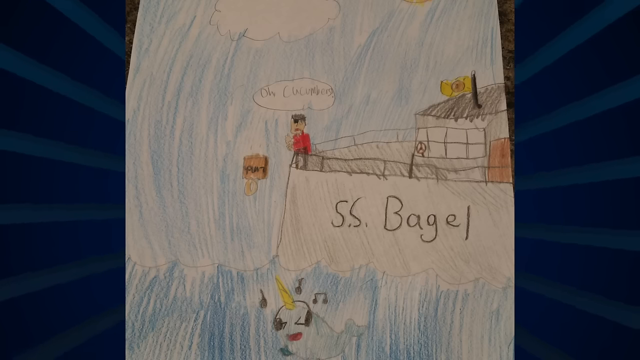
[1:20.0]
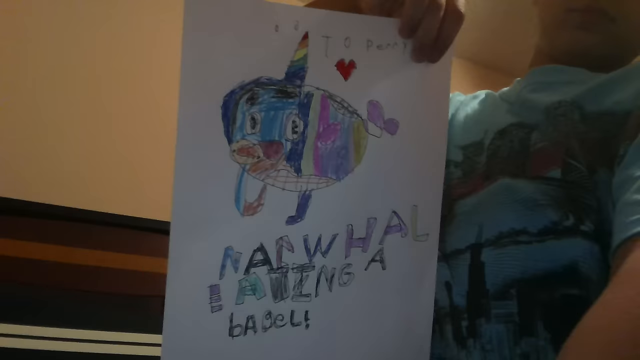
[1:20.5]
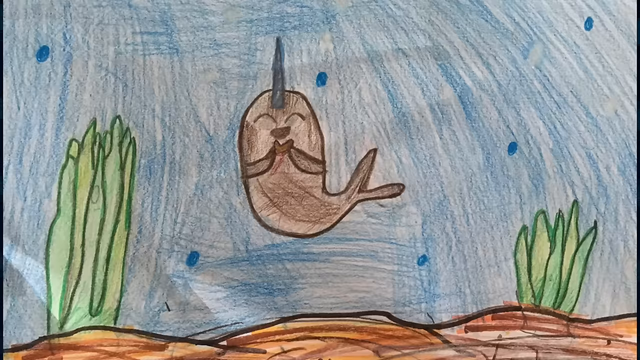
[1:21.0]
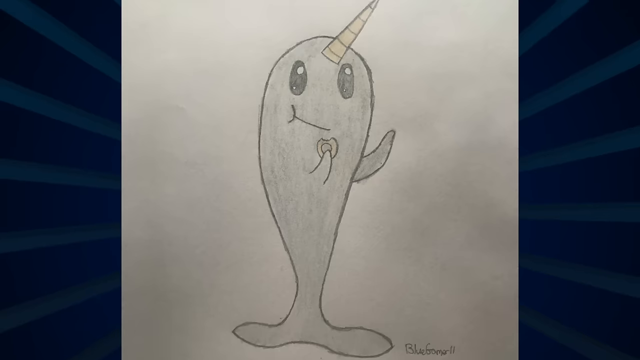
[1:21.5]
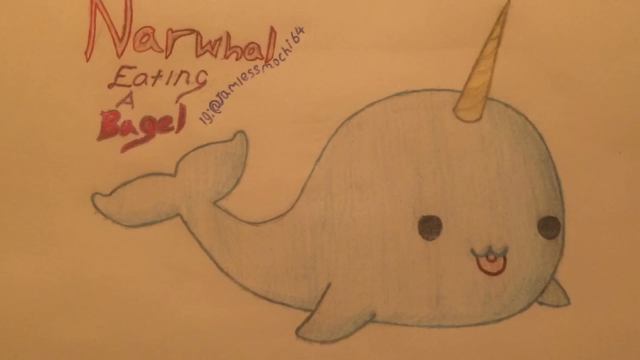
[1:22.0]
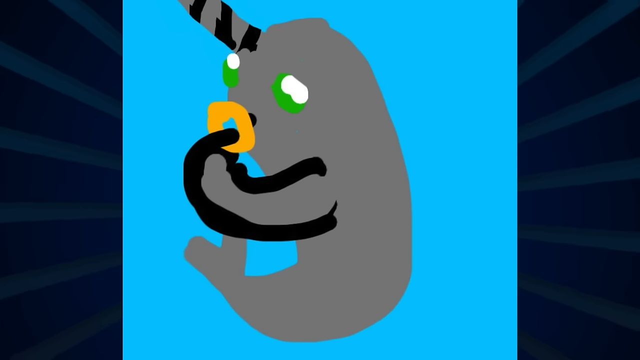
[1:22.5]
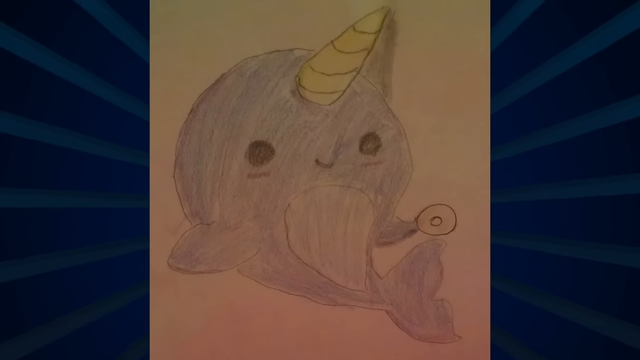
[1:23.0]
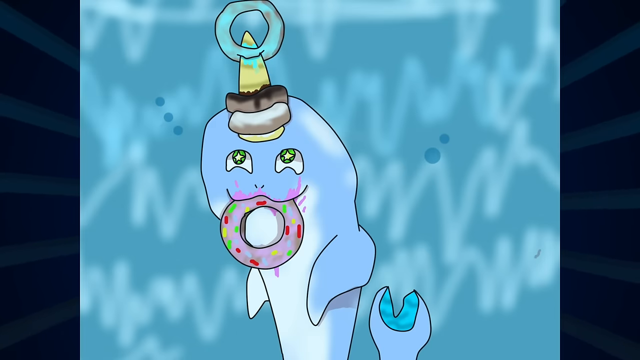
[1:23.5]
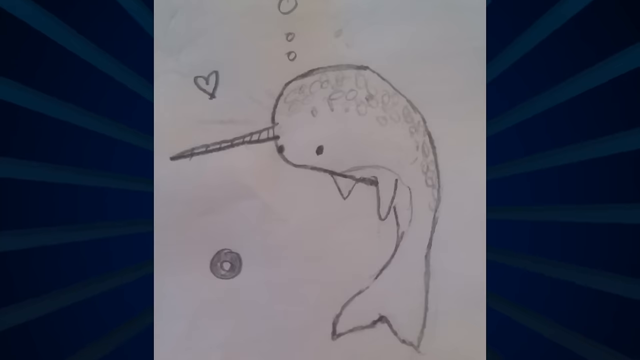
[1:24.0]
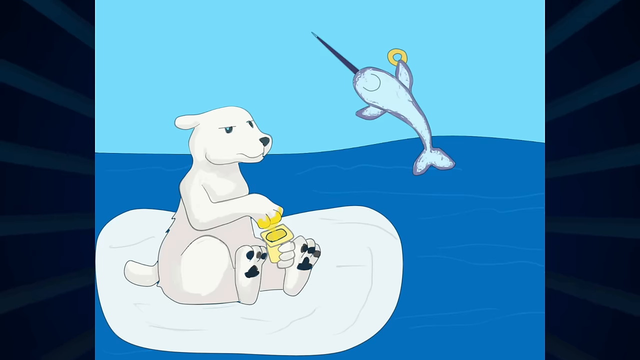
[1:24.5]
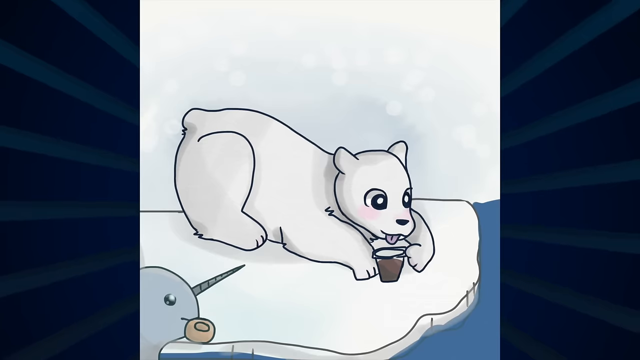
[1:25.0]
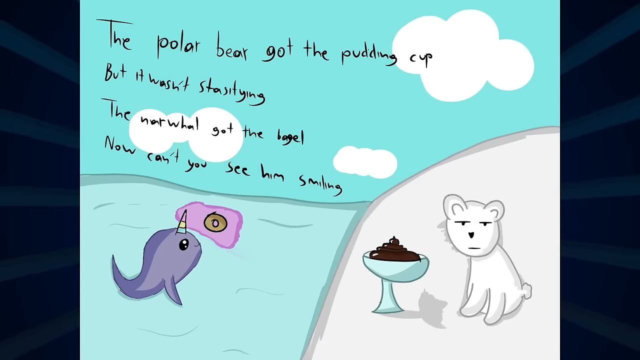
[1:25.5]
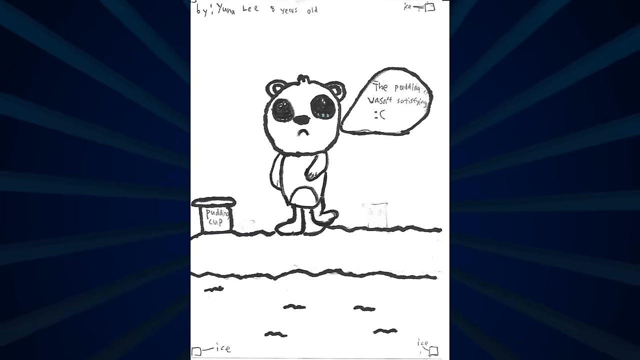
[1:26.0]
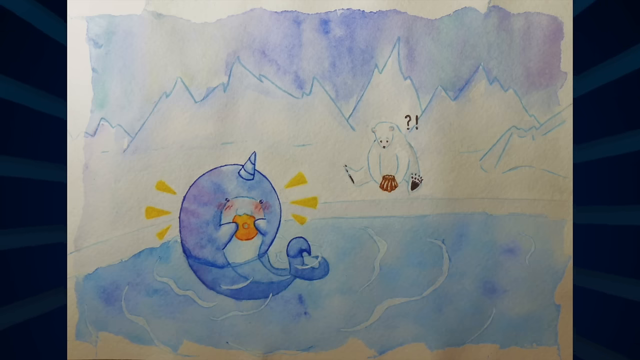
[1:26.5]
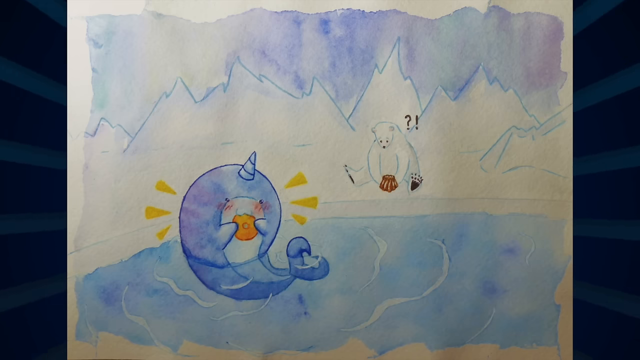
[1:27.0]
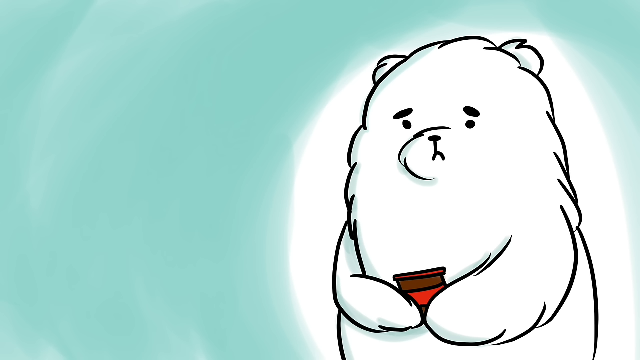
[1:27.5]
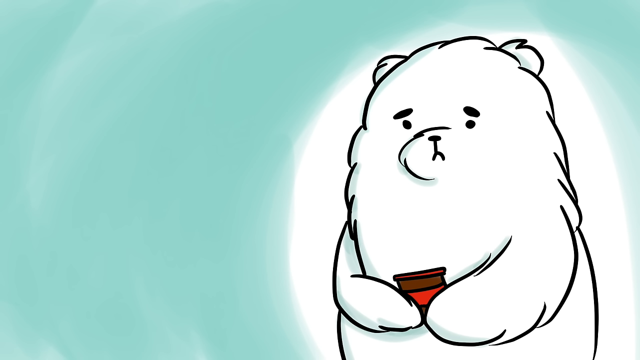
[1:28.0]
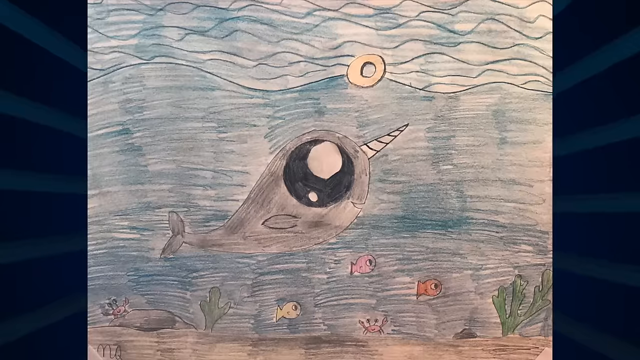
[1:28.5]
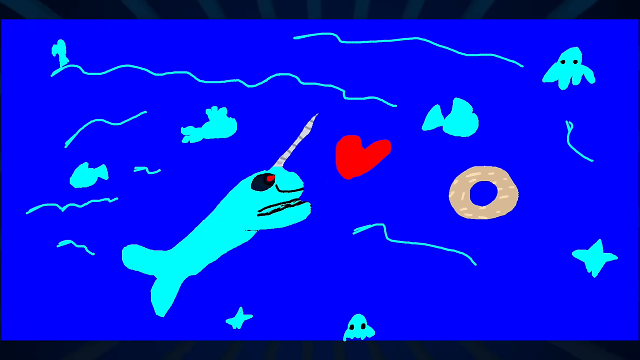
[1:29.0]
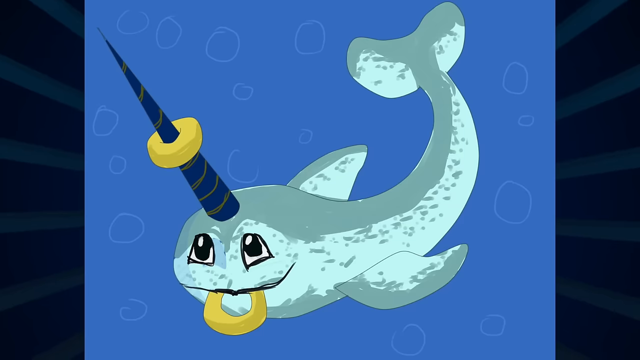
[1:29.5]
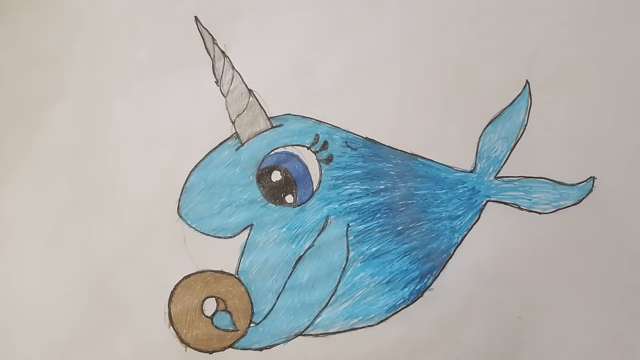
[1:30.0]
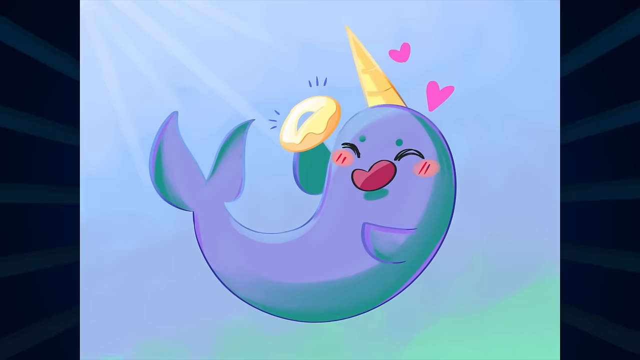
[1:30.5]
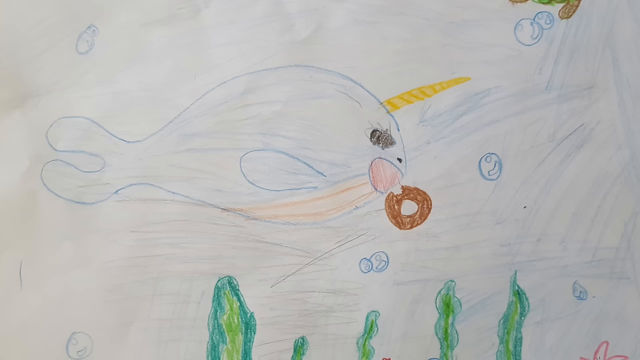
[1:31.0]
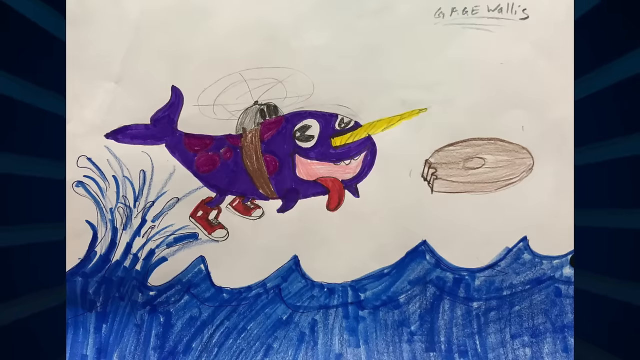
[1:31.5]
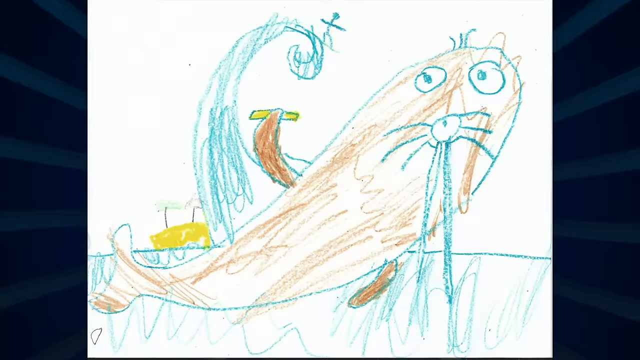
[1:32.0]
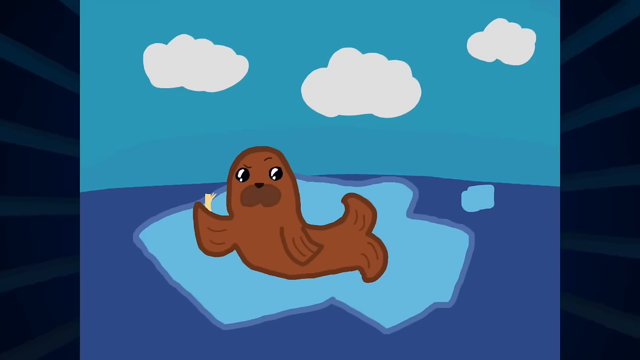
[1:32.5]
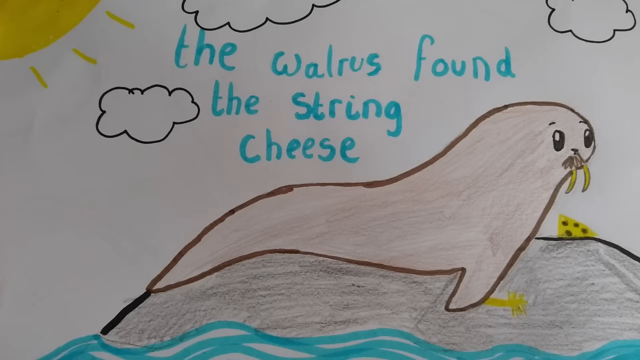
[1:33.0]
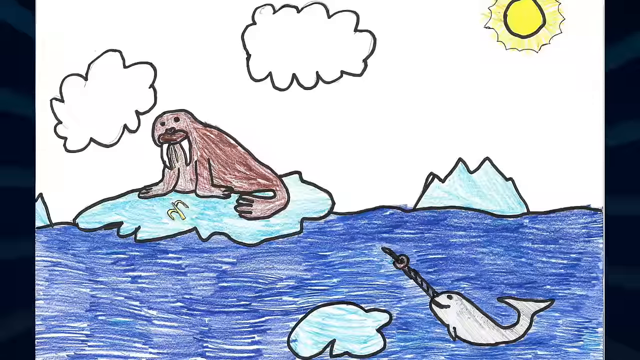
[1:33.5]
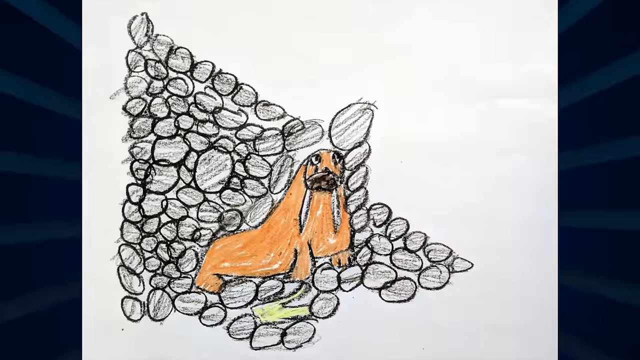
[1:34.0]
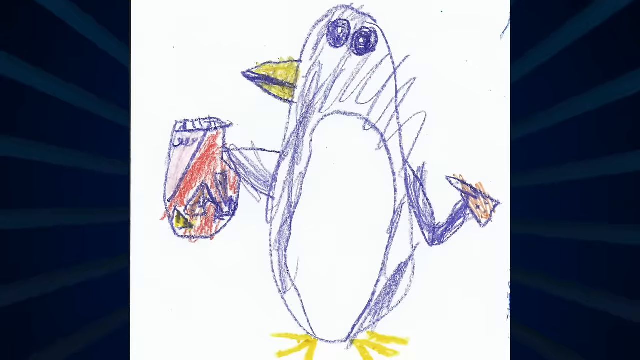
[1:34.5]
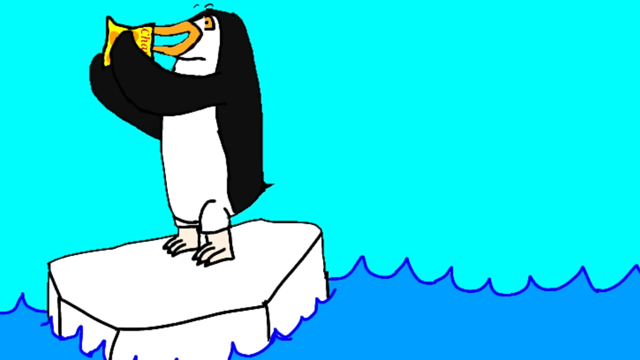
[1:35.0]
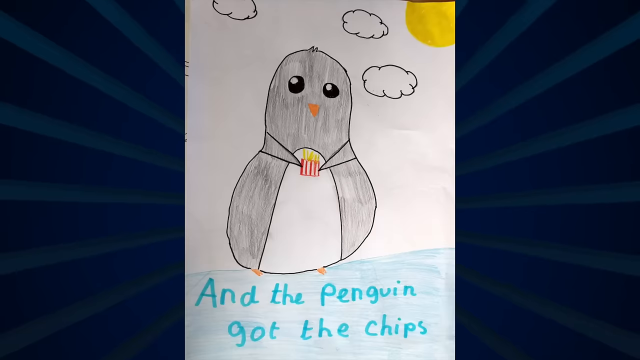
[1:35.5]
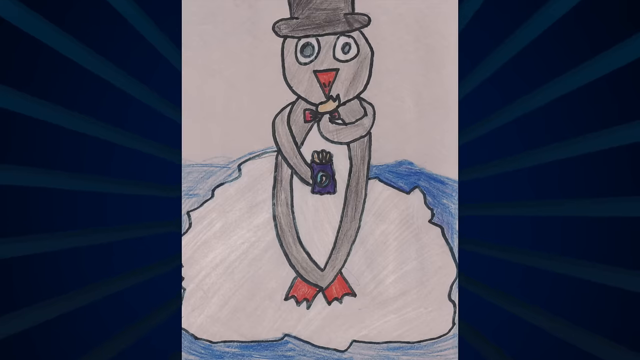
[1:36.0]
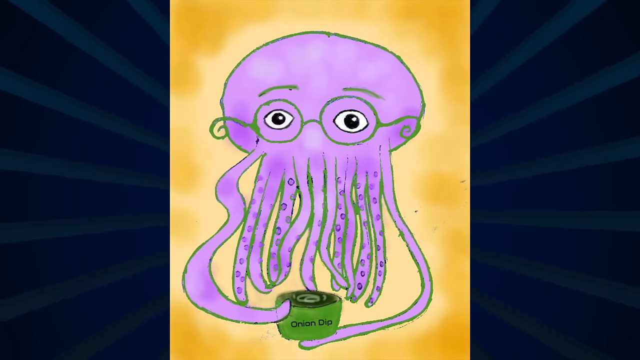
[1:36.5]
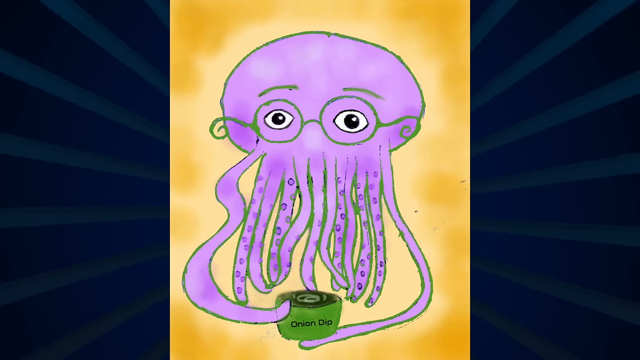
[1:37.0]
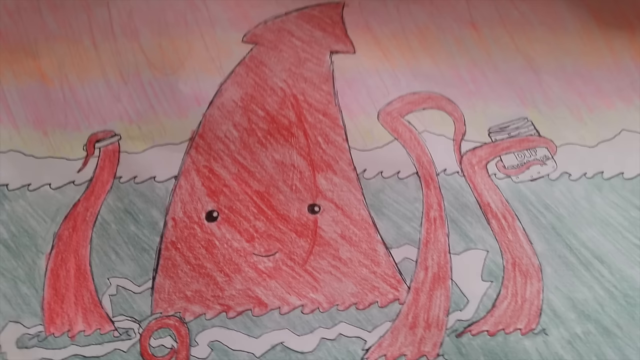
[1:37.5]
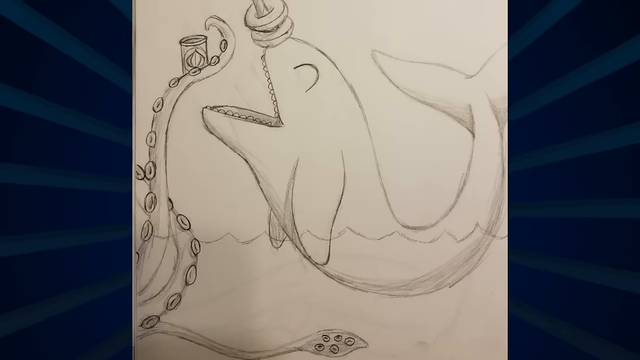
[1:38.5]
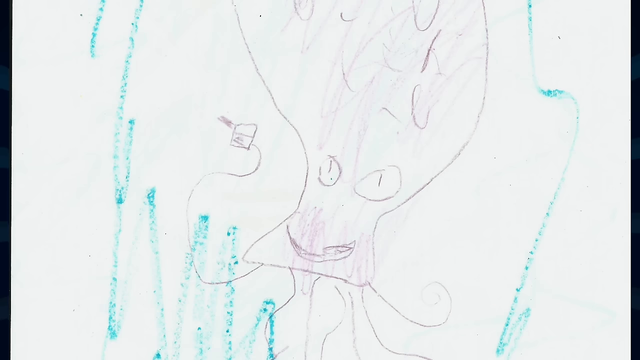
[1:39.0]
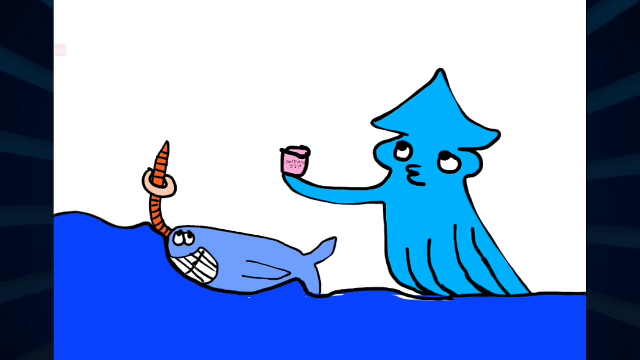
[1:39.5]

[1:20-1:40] A fisherman on a boat named the SS Bagel tosses a bagel over the side to feed the narwhal. Next, a child holds a picture of a colorful narwhal eating a bagel. A brown narwhal smiles while holding a bagel. A happy narwhal has multiple bagels: a confetti bagel in its mouth and three more on its horn. A polar bear uses its paw to eat from a pudding cup while a narwhal leaps out of the water holding onto a bagel. Another picture shows the narwhal enjoying its bagel while a polar bear enjoys chocolate pudding. A drawing shows the polar bear unhappy with its pudding while the narwhal smiles with its bagel, and in the next few drawings the polar bear is not happy. The drawings switch back to the narwhal and its bagel, then show a walrus, penguin, octopus and squid eating food.